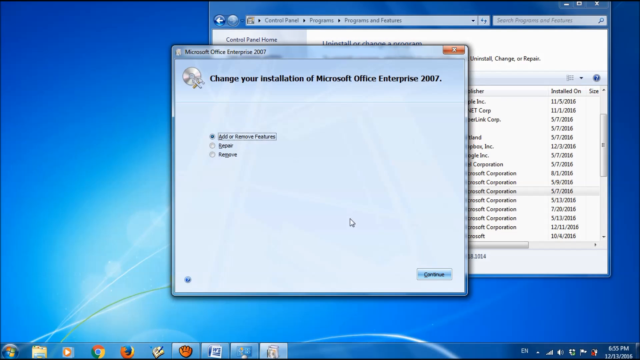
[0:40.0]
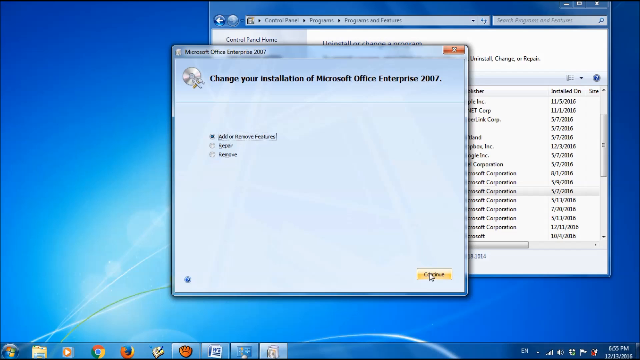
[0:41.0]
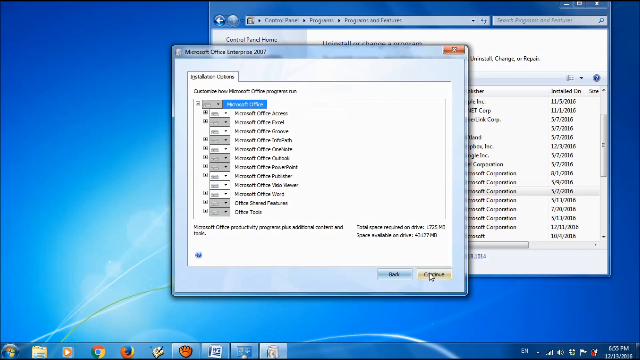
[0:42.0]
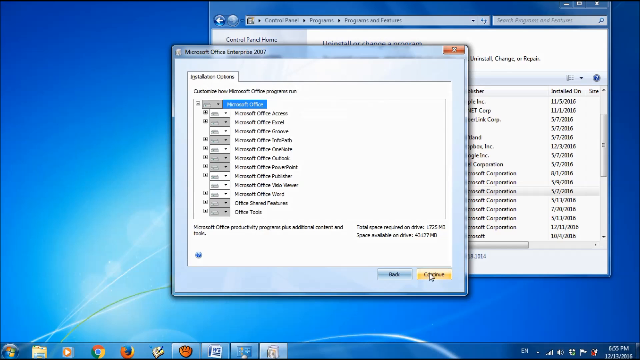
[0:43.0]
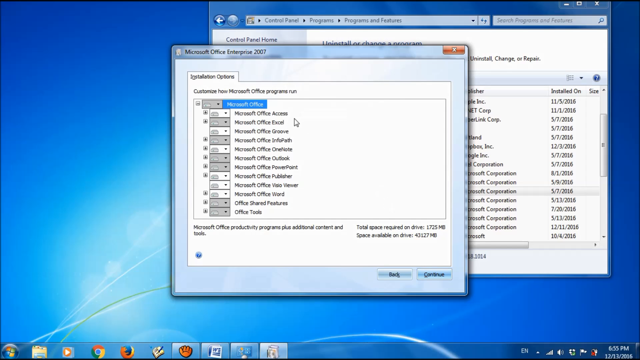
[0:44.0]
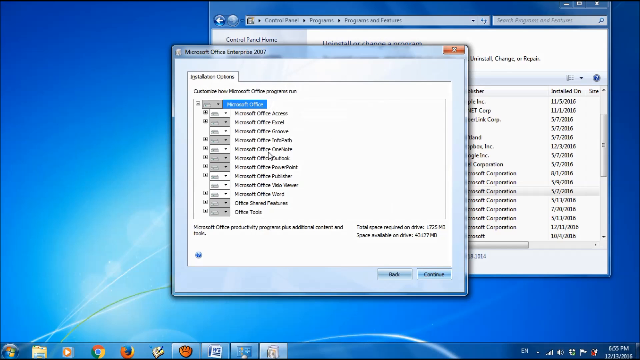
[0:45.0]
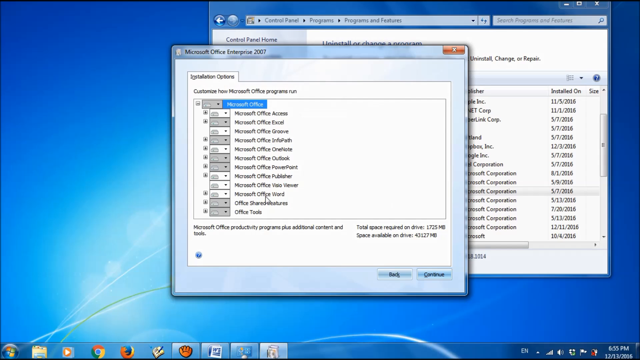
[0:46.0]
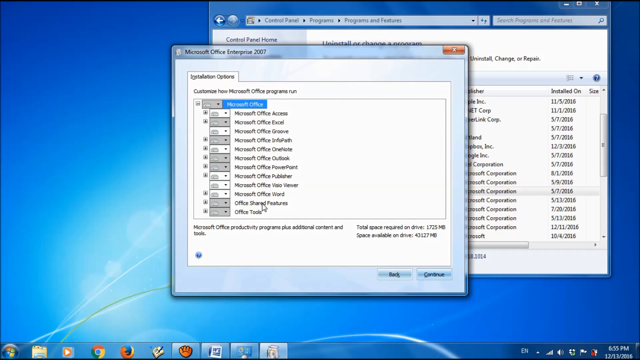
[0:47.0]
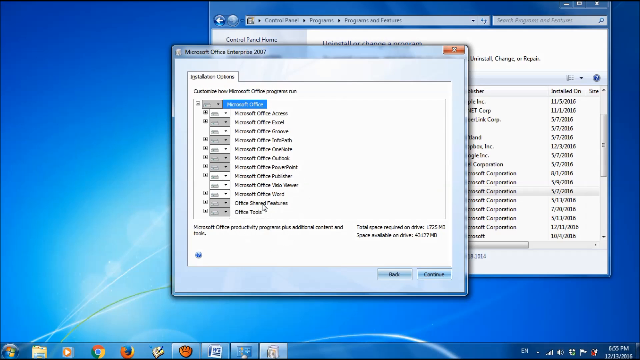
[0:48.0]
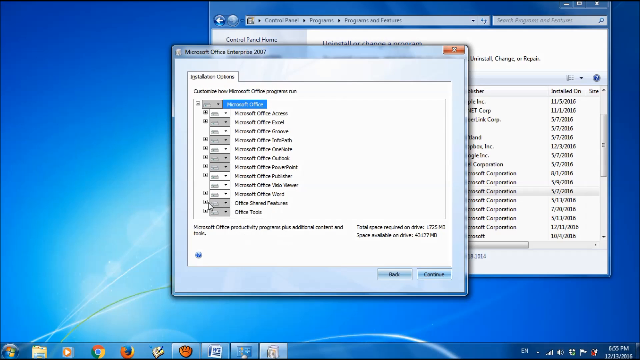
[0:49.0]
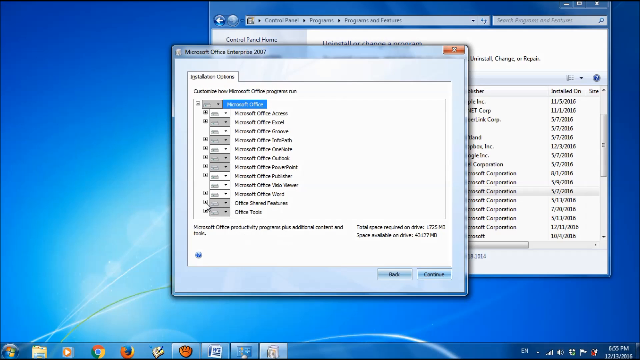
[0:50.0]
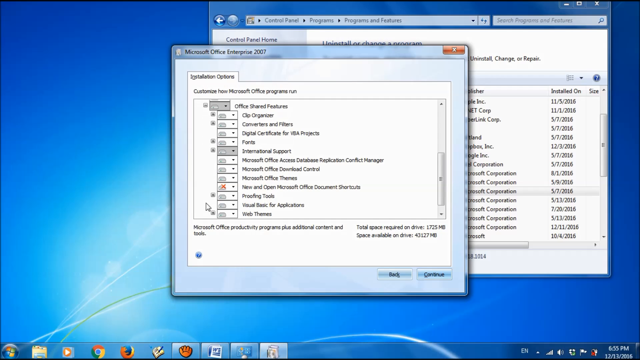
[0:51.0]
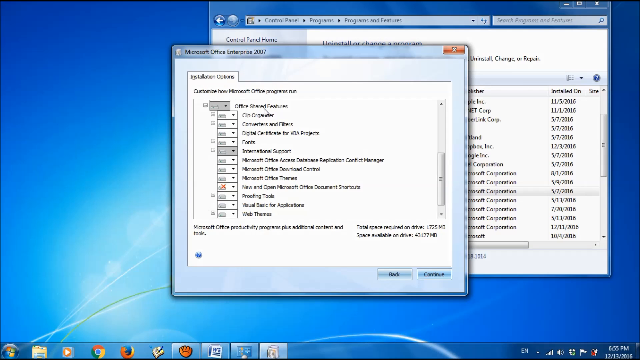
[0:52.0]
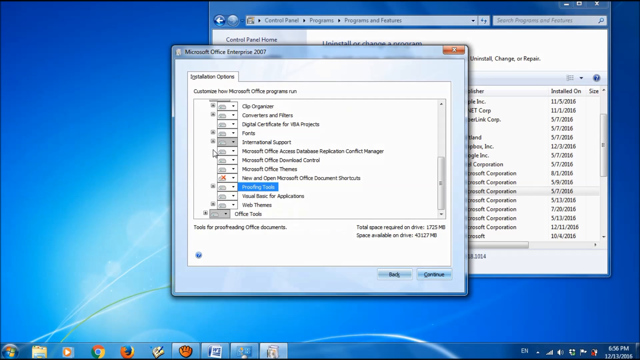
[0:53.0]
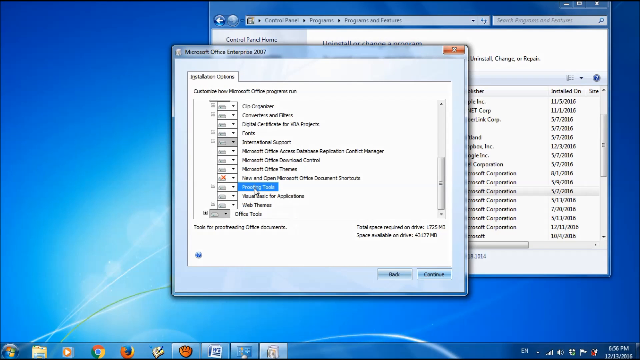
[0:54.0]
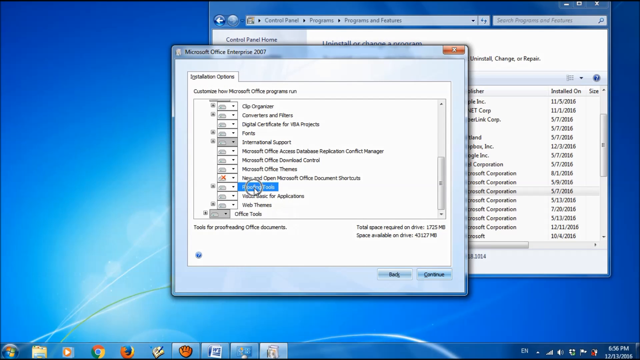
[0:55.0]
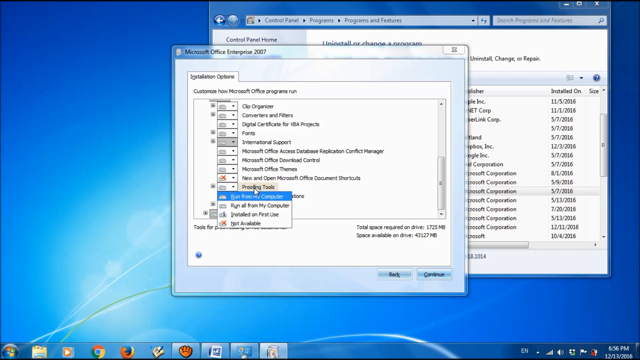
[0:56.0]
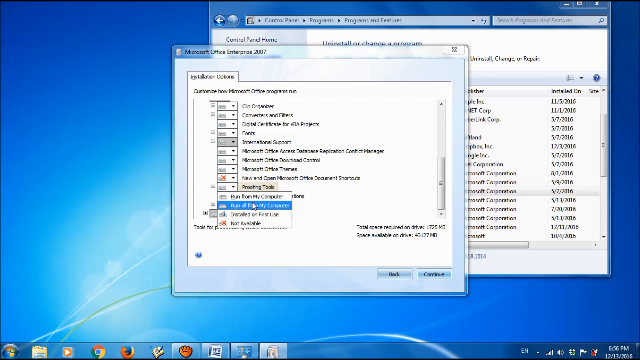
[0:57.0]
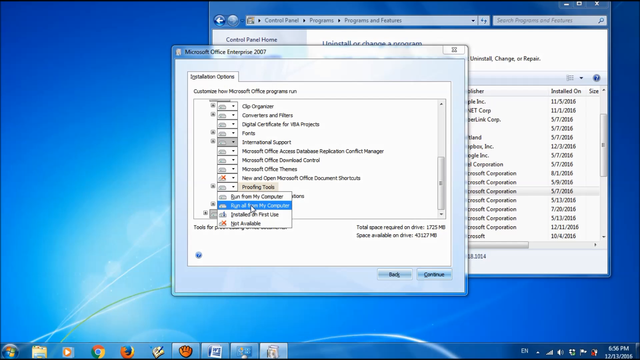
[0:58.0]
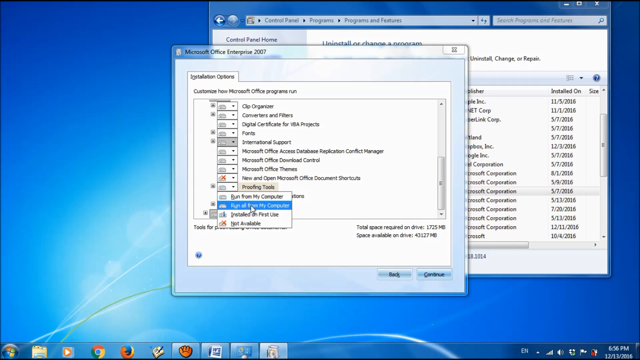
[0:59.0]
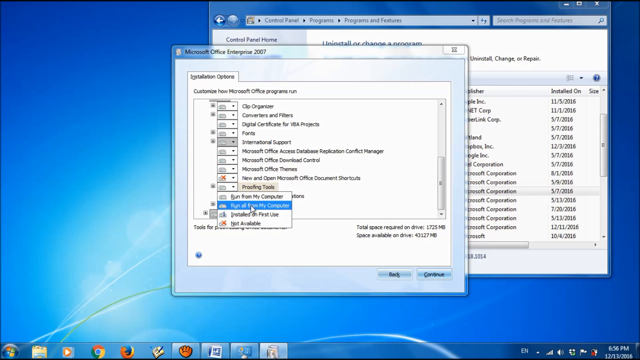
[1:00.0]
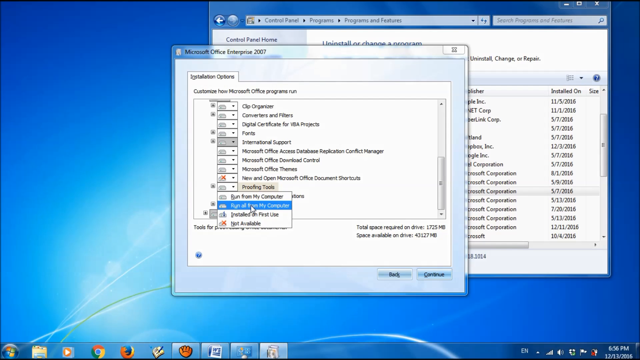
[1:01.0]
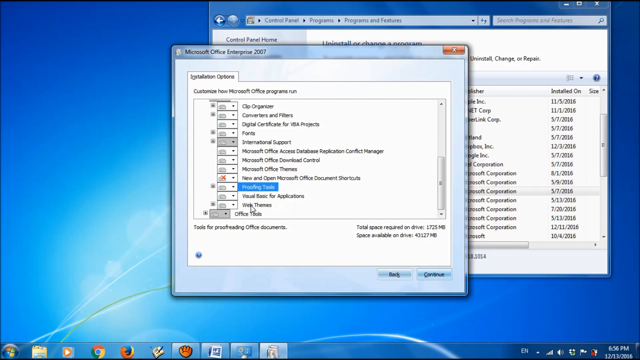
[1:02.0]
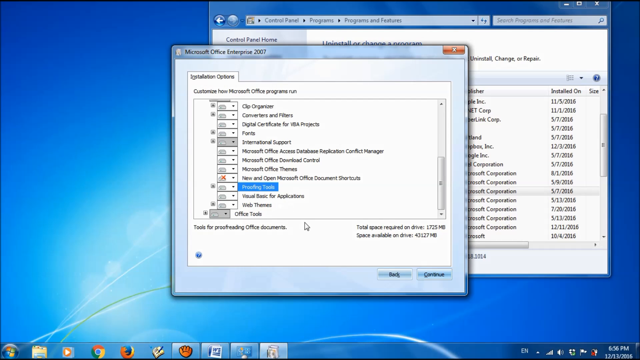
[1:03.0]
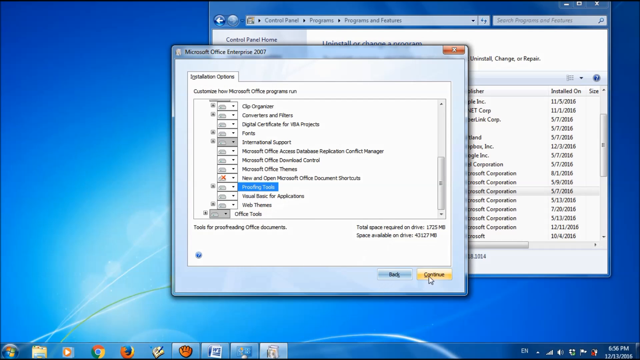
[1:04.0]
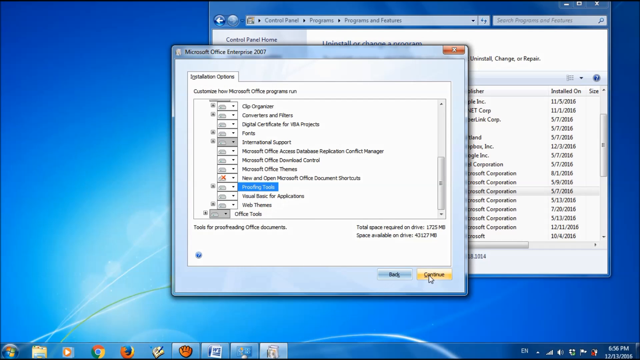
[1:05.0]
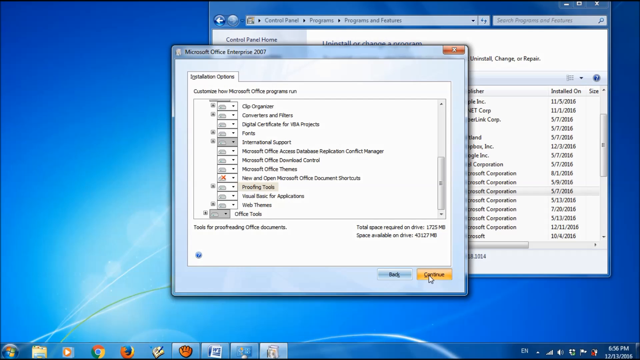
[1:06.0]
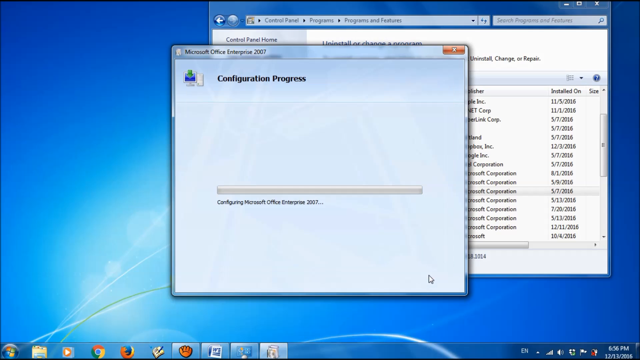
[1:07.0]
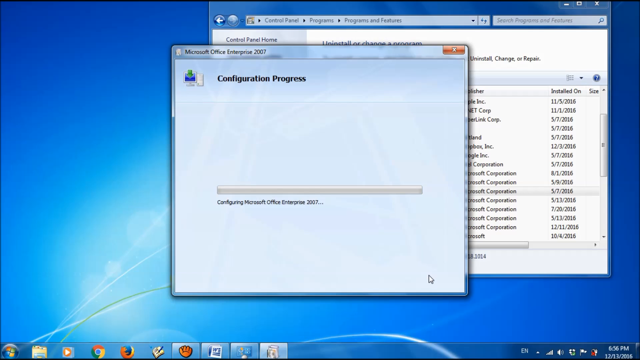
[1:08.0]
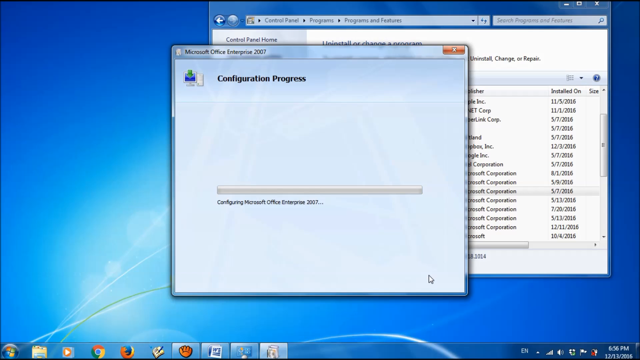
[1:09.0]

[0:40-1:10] When the continue button is clicked it turns a bright yellow, and a page that says "installation options" comes up. It lists a number of programs, such as Microsoft Office, Office Tools, Office Outlook, Office PowerPoint, Office Publisher and Office Word; some have the icons next to them highlighted white and some are just gray. Below that it says "Microsoft Office productivity programs plus additional content and tools." The selection appears to be on an option called Office Shared Features, and the icon next to it is clicked to expand it, revealing options such as fonts, international support, proofing tools, web themes, and Visual Basic for applications. The cursor moves down and highlights the proofing tools option.